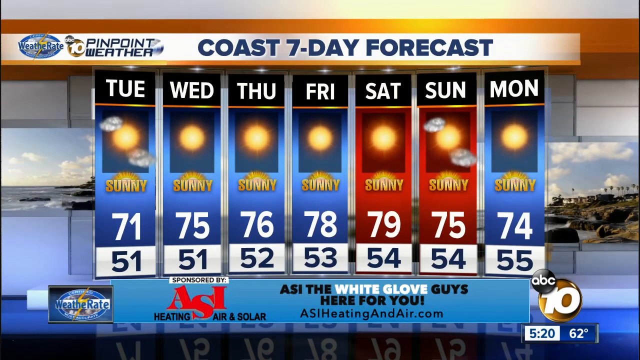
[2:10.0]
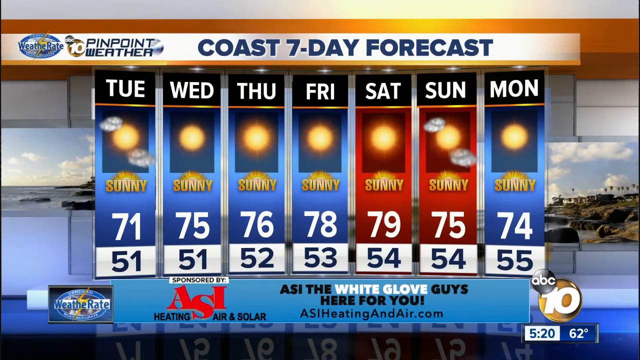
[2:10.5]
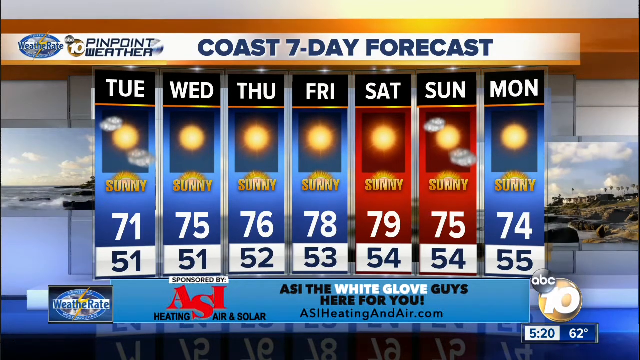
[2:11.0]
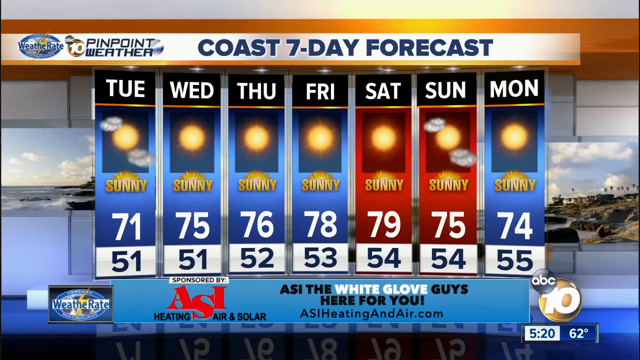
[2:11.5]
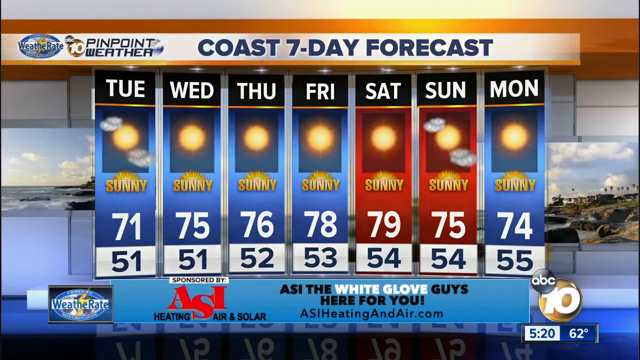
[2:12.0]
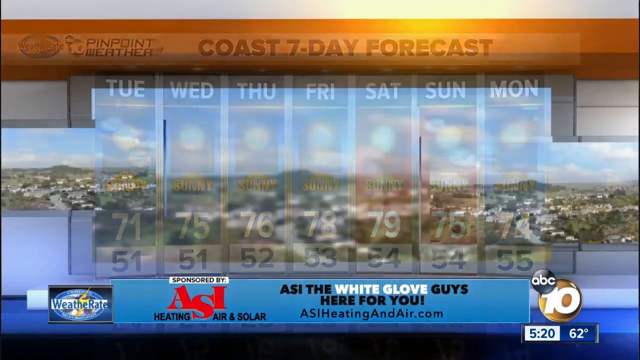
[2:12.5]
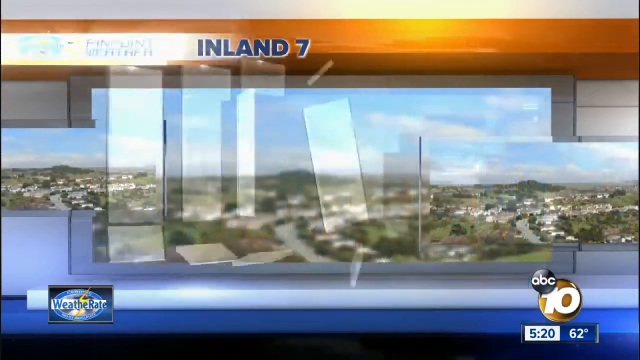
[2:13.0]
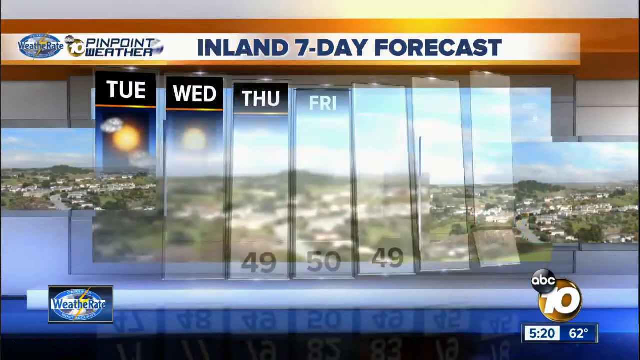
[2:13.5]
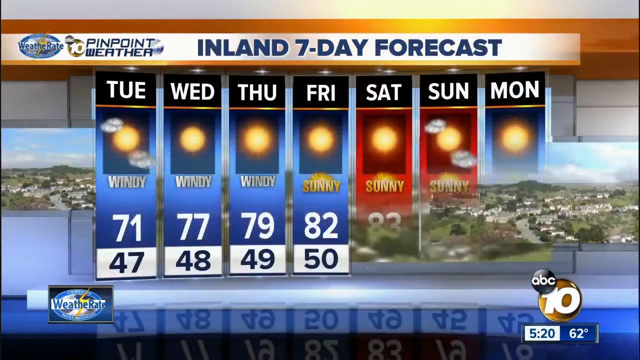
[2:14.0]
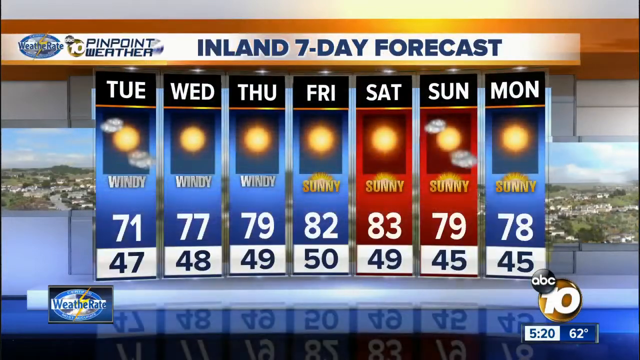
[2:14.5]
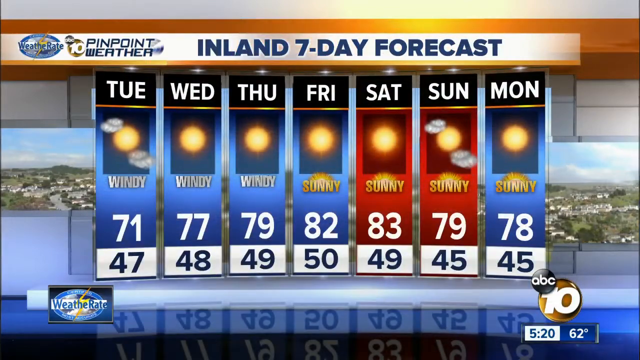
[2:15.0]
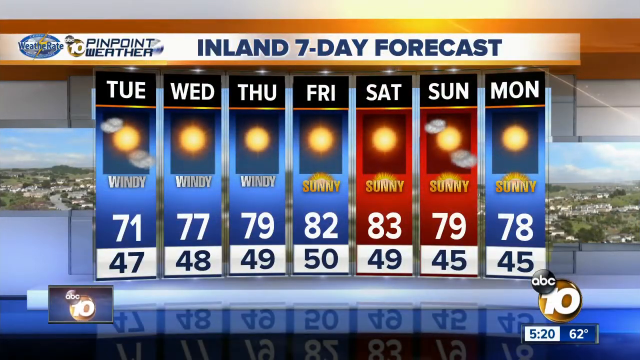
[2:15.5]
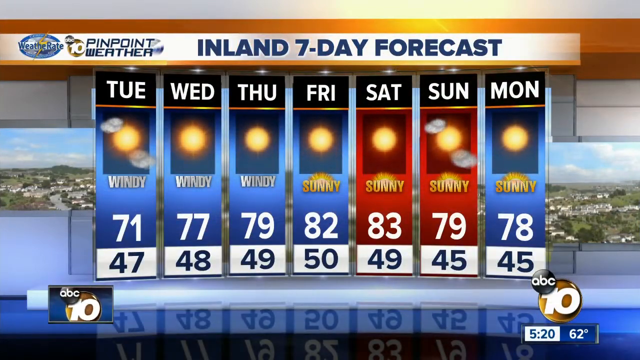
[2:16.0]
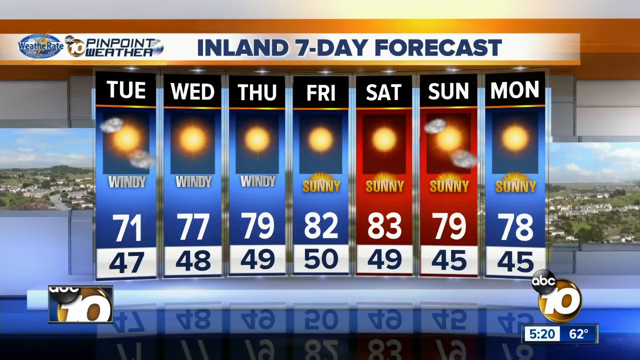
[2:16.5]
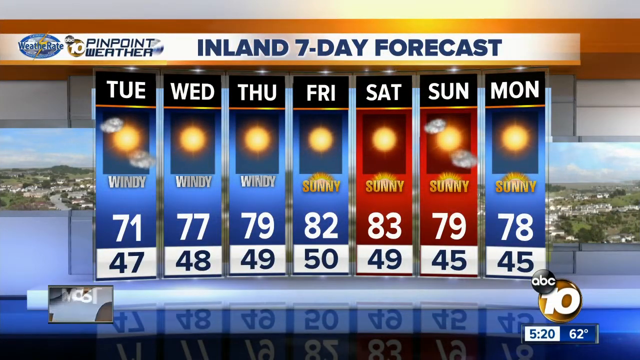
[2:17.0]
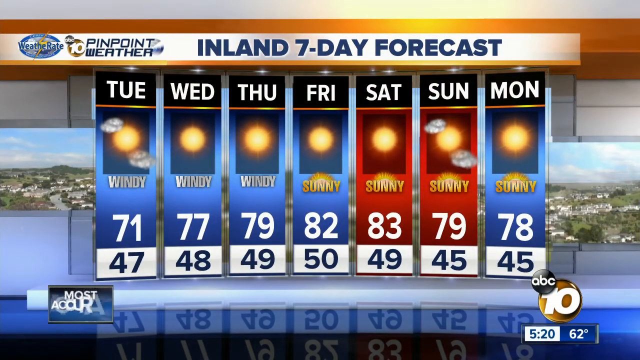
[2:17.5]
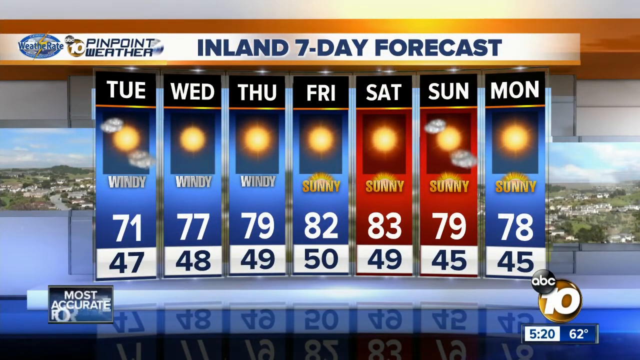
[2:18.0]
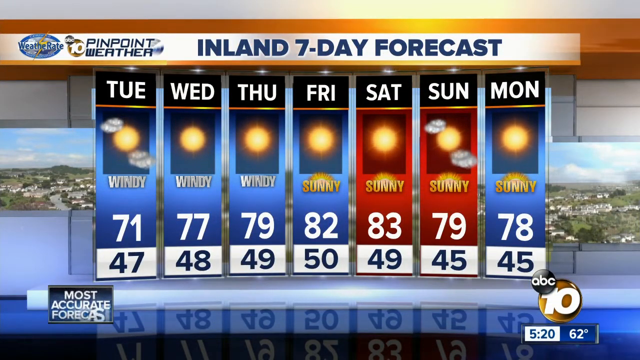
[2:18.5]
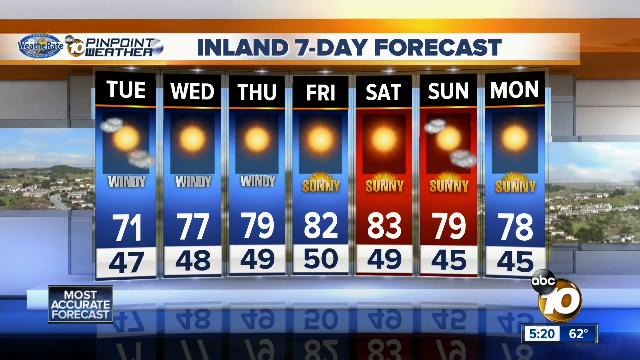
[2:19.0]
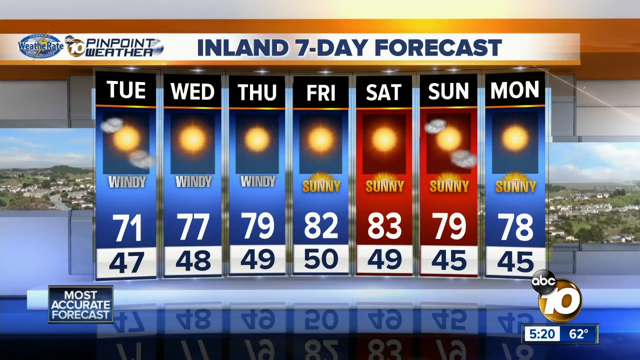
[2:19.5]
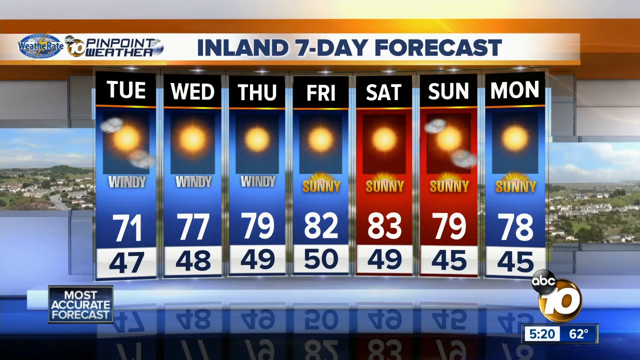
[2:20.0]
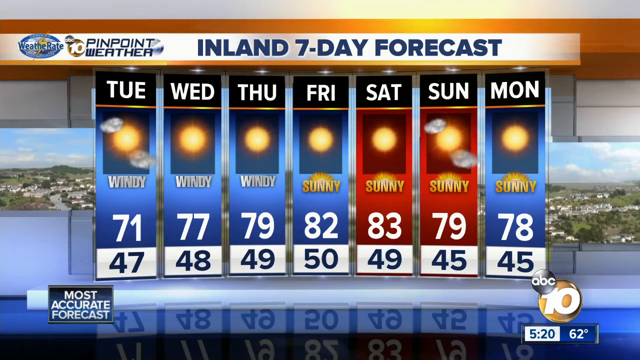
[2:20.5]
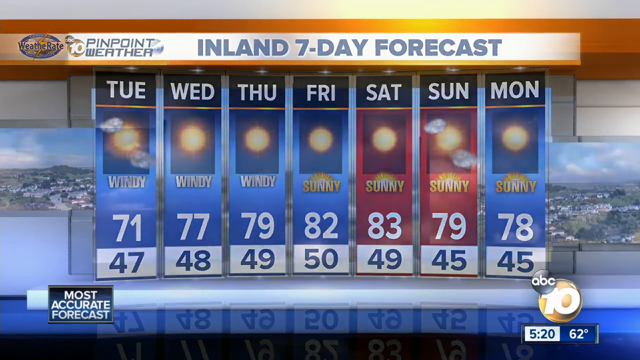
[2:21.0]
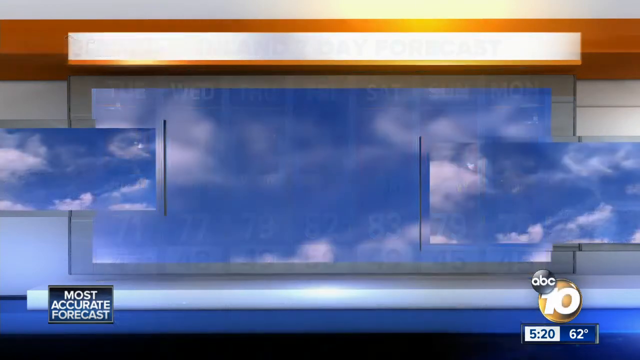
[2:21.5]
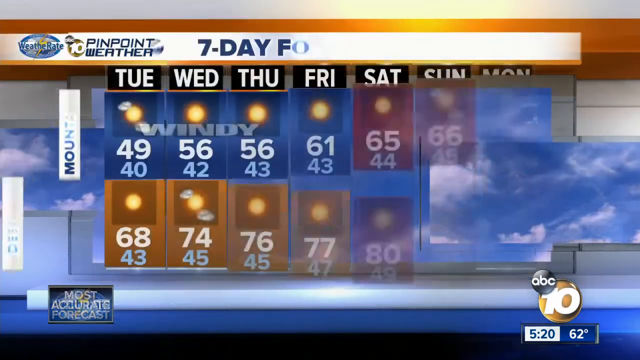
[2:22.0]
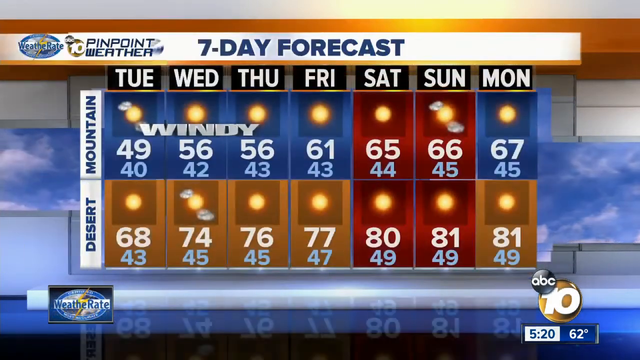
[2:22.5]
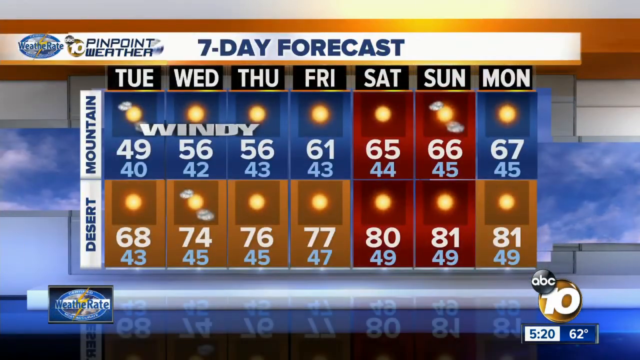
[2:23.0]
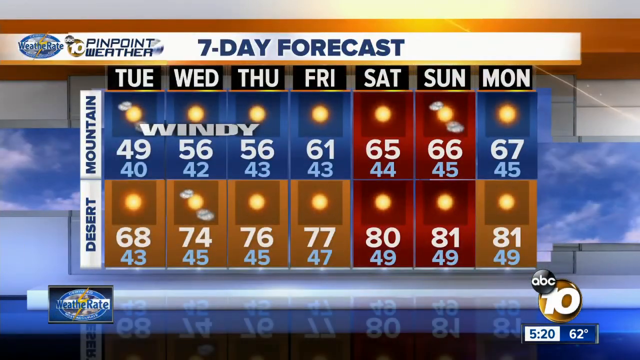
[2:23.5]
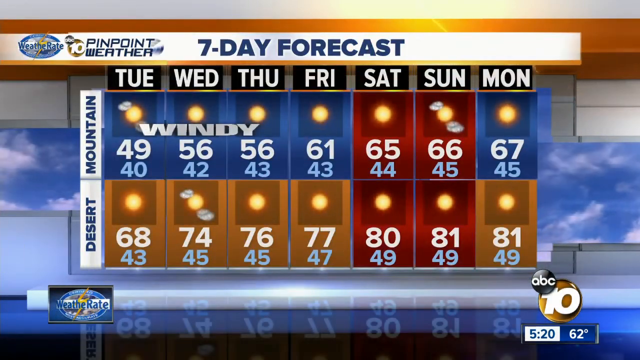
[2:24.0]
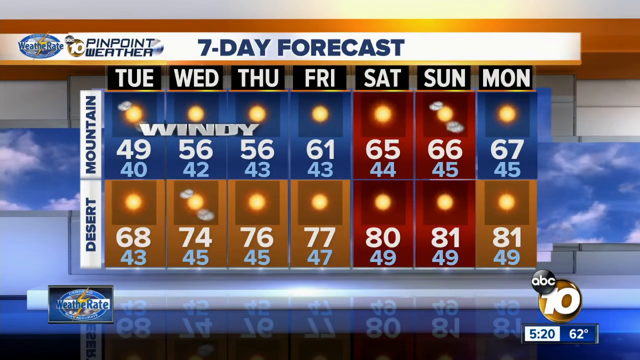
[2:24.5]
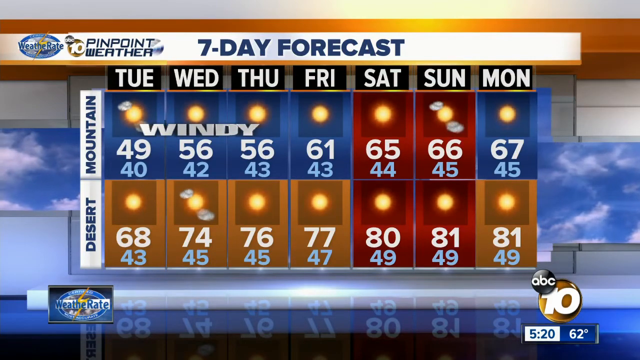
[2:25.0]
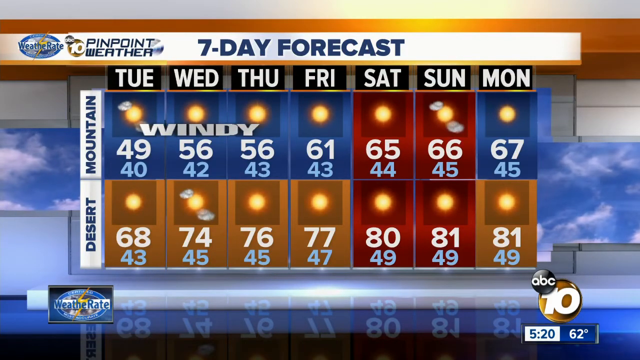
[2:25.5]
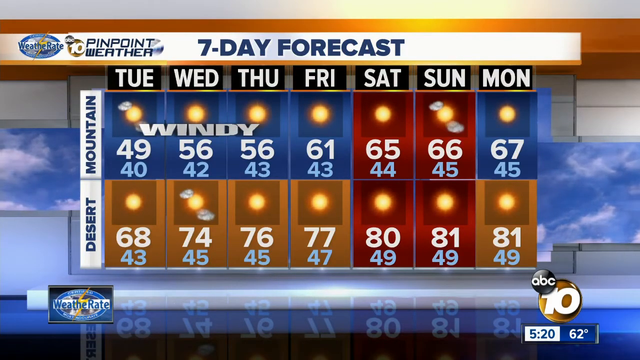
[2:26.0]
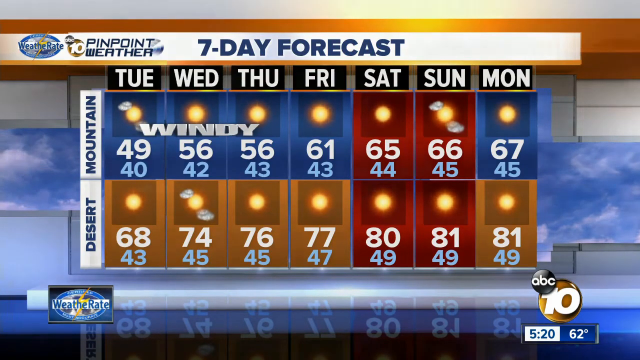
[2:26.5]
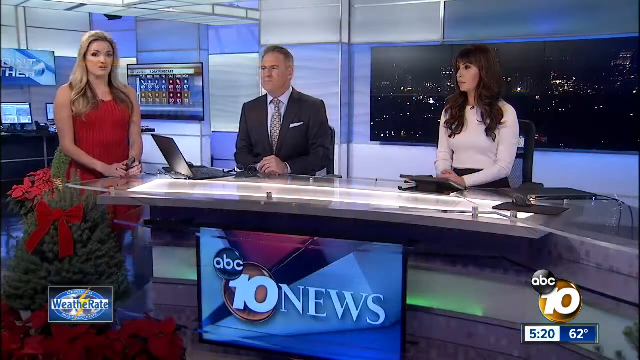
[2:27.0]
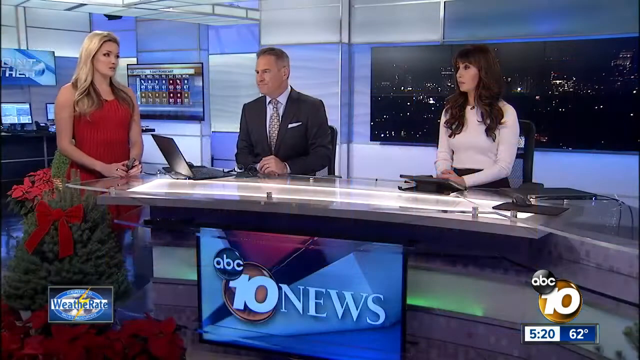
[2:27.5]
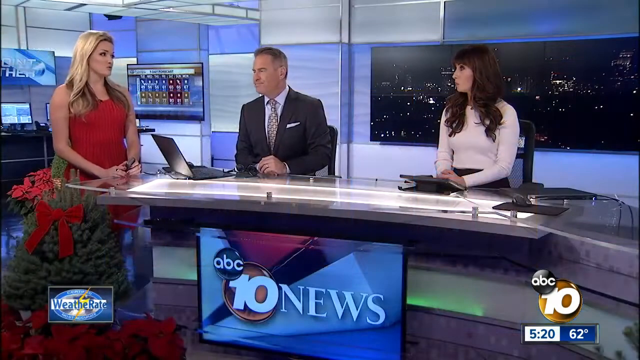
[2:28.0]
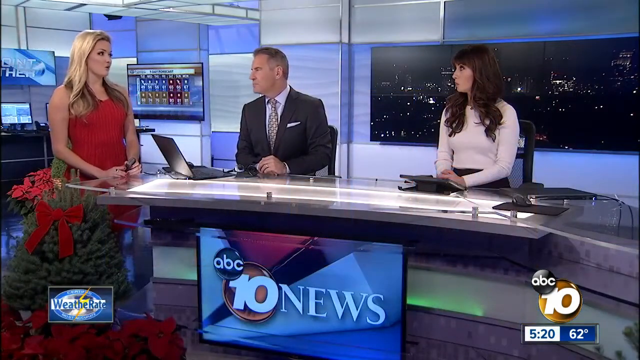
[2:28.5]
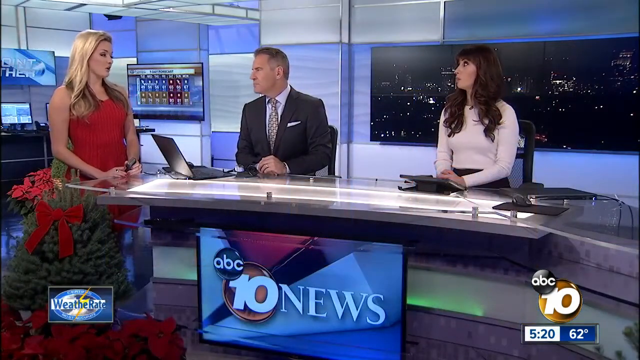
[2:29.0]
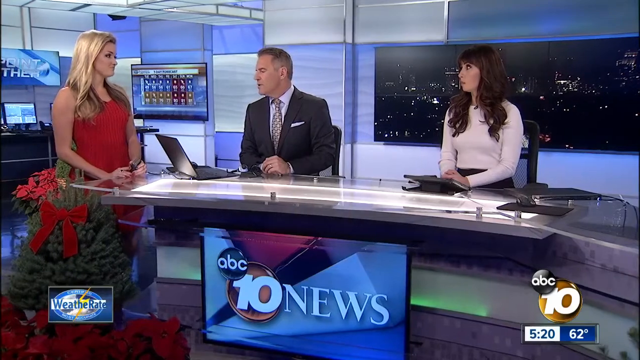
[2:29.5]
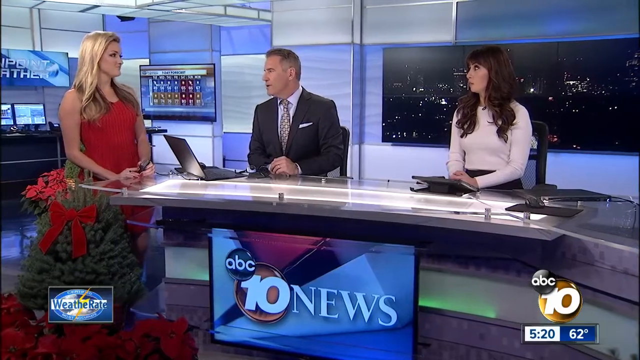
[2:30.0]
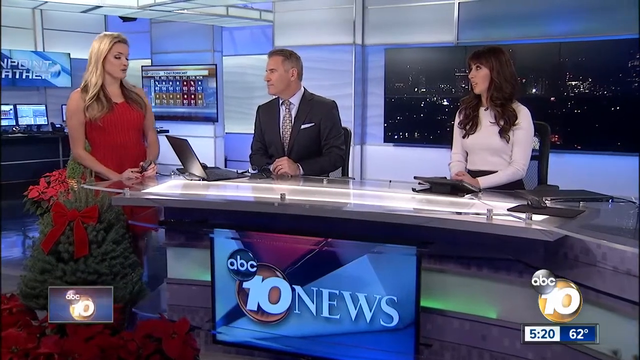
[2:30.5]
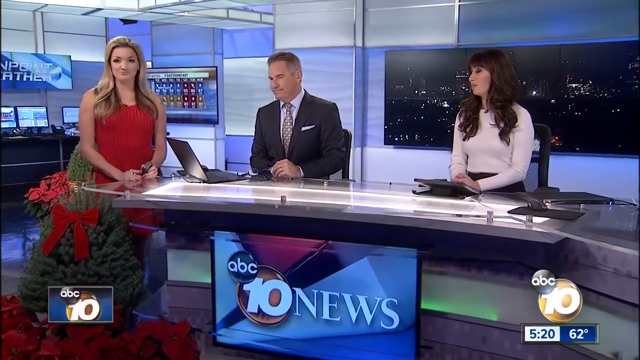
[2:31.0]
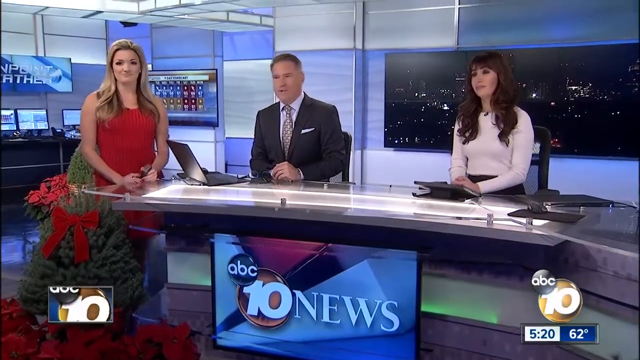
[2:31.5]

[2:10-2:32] The coast seven-day forecast shows sunshine for each day, with a few clouds on Tuesday and Sunday, and "sunny" written under every one. The highs are all in the 70s and the lows all in the 50s. A new headline reads "inland seven day forecast" on the same graphic with slightly different numbers: the lows look a little lower, and the highs seem perhaps a tiny bit higher. Next, a seven-day forecast is shown briefly with a different structure, two sections labeled vertically "mountain" and "desert." In the top mountain section, Tuesday through Friday are blue, Saturday and Sunday red and Monday blue; in the desert section beneath, the first four are brown, then two red, then one brown. They all show sunshine, with a couple of clouds, and highs and lows. The view then switches back to the three people, now all at the same desk: the weather woman is on the left, standing behind the desk and behind the small Christmas tree with a red bow, and the other man and woman are to her right.